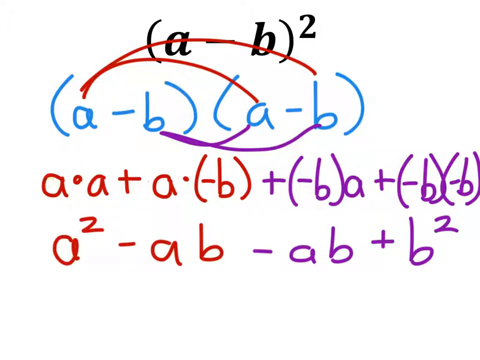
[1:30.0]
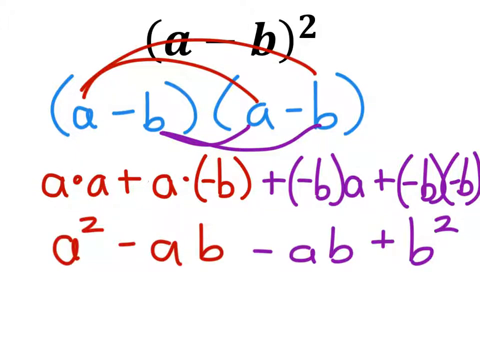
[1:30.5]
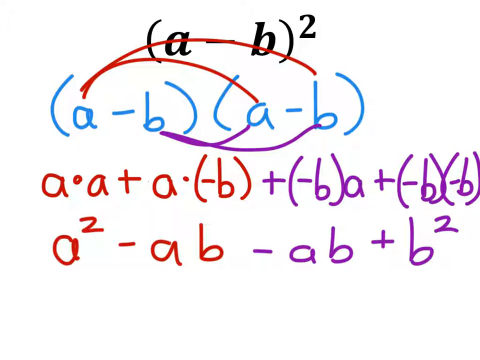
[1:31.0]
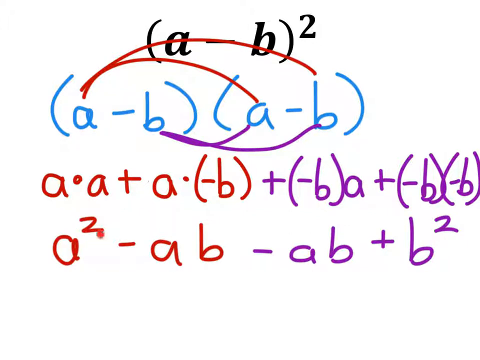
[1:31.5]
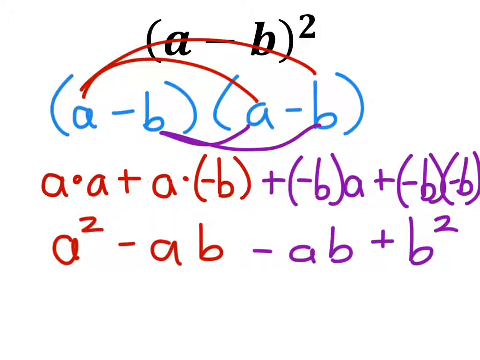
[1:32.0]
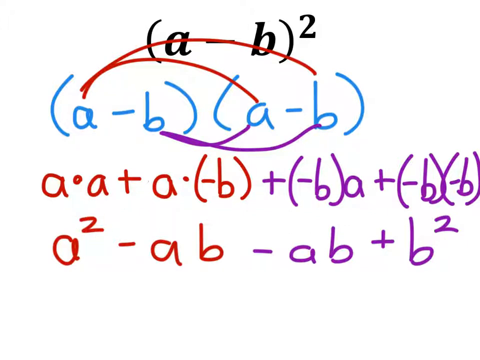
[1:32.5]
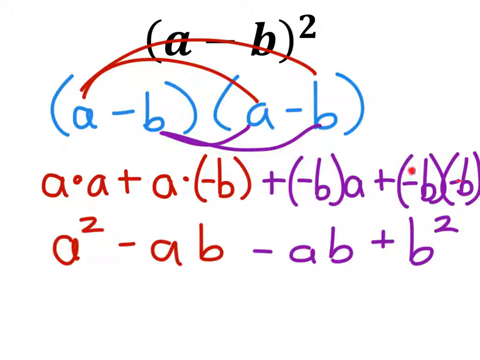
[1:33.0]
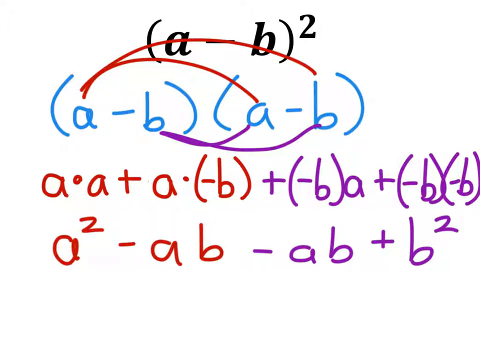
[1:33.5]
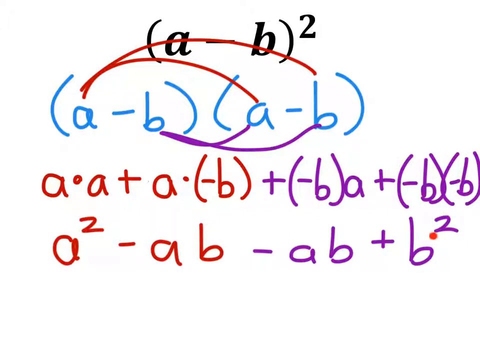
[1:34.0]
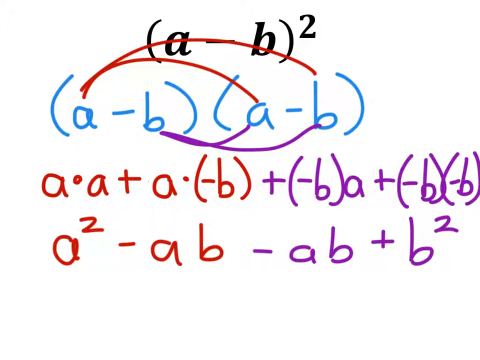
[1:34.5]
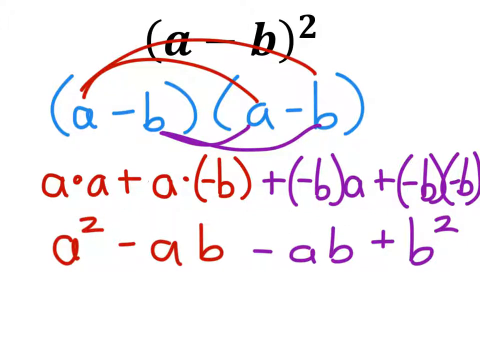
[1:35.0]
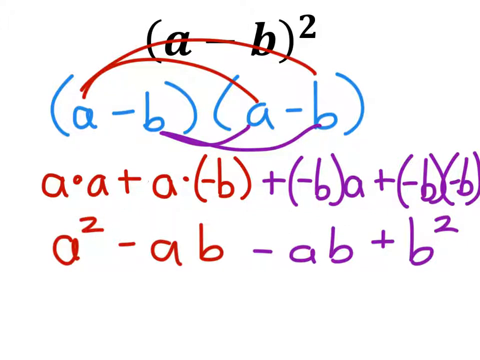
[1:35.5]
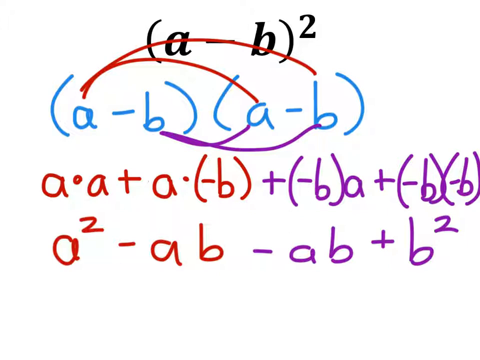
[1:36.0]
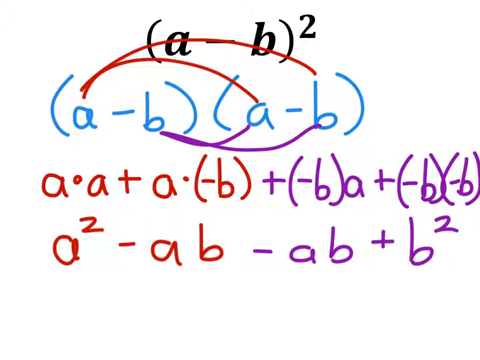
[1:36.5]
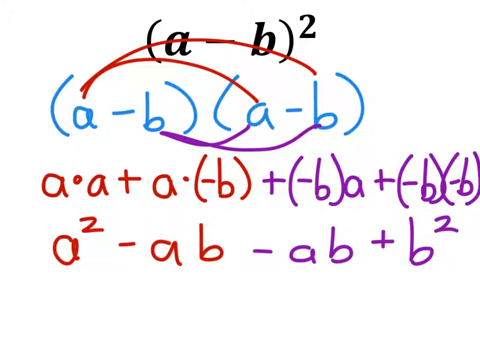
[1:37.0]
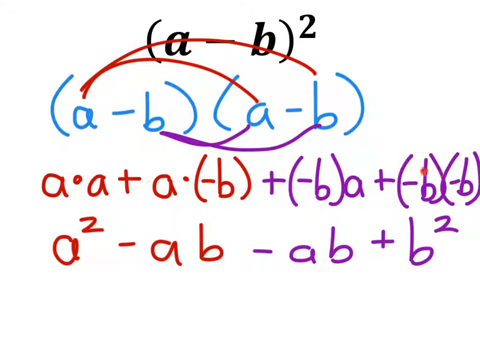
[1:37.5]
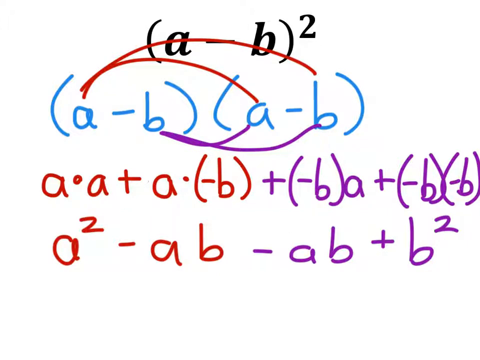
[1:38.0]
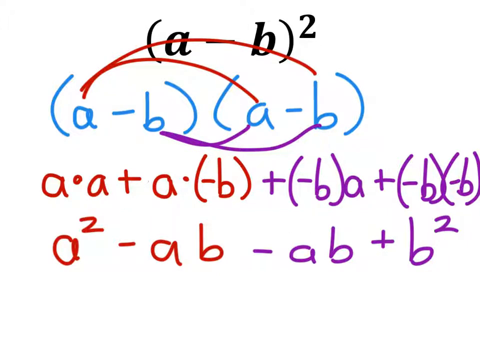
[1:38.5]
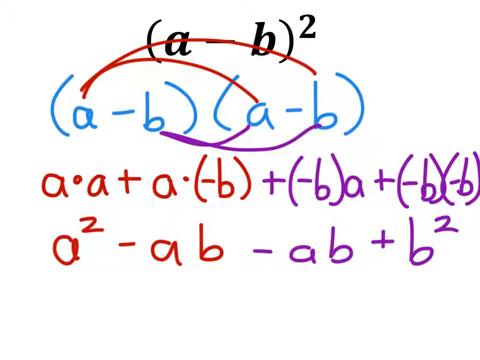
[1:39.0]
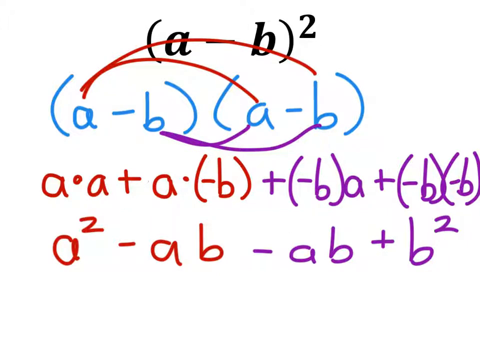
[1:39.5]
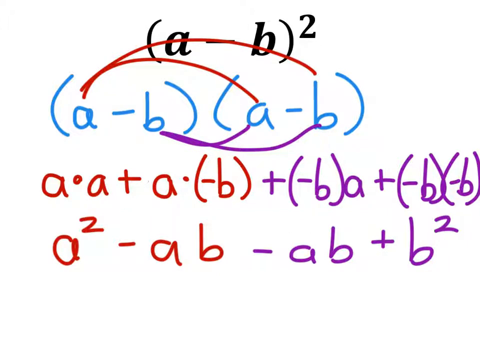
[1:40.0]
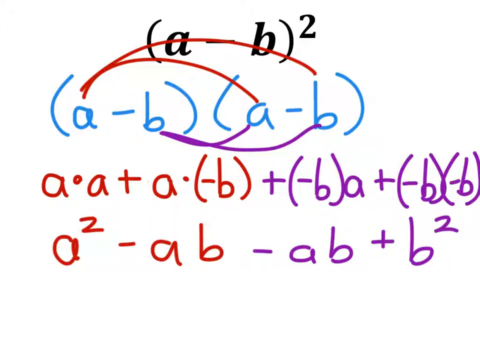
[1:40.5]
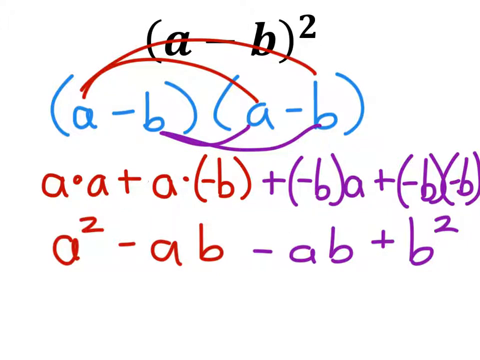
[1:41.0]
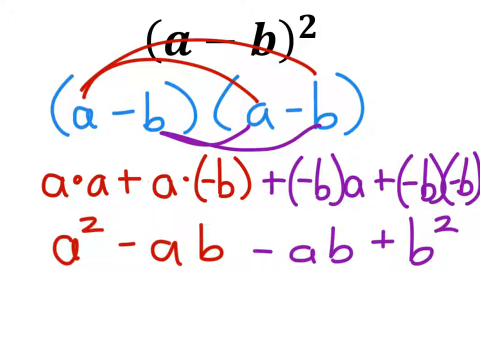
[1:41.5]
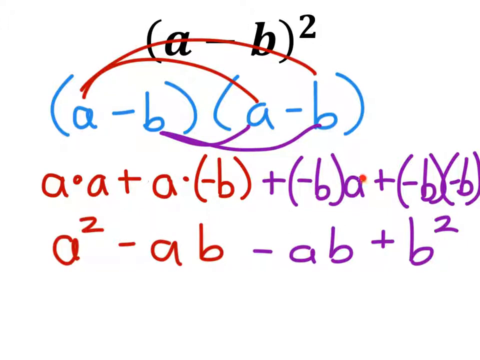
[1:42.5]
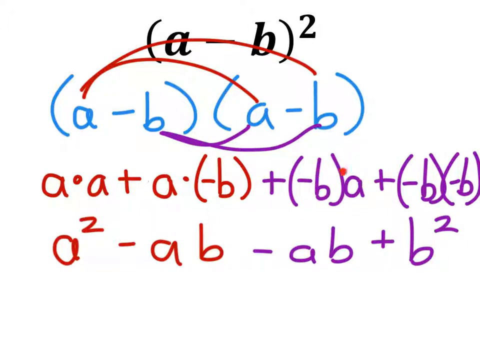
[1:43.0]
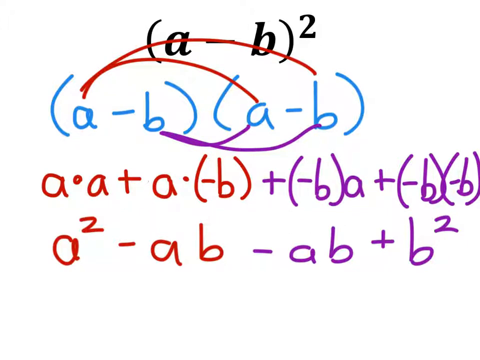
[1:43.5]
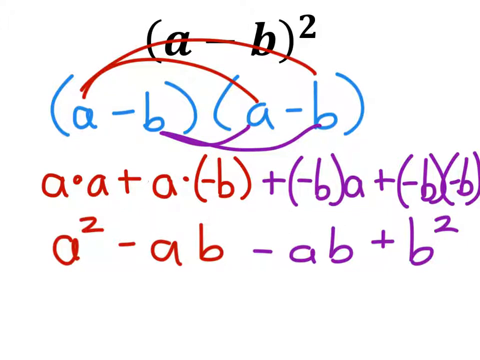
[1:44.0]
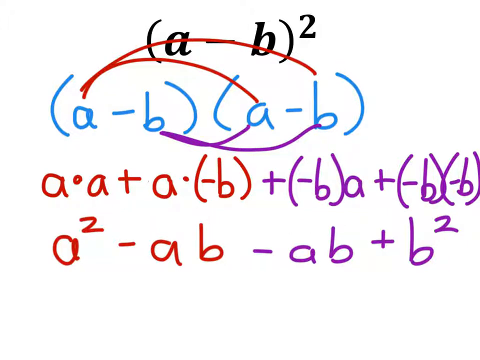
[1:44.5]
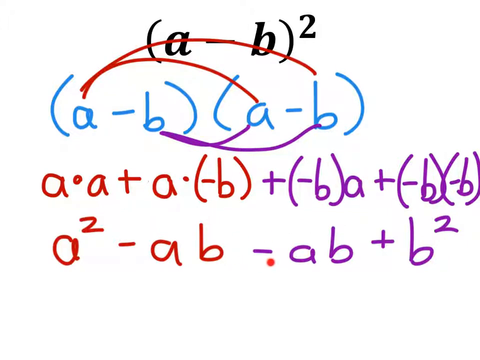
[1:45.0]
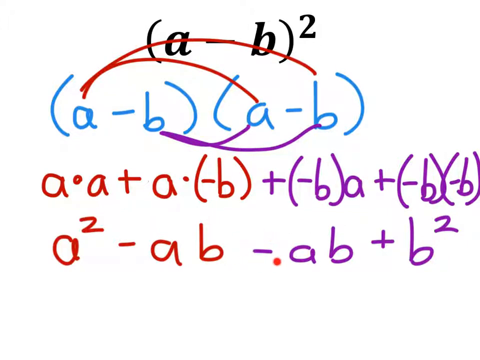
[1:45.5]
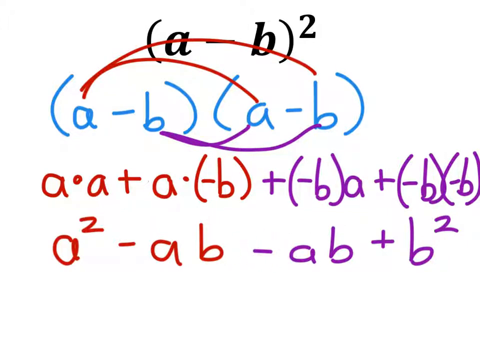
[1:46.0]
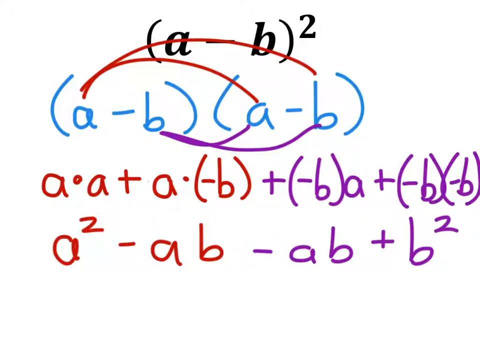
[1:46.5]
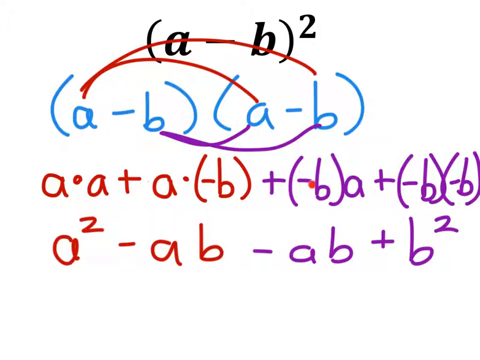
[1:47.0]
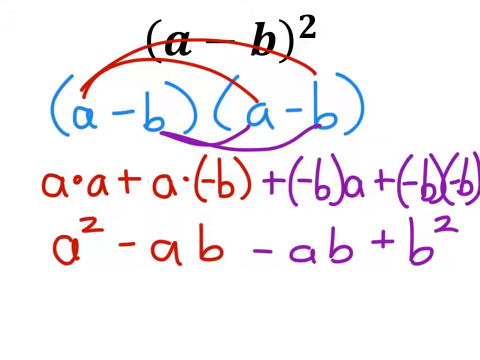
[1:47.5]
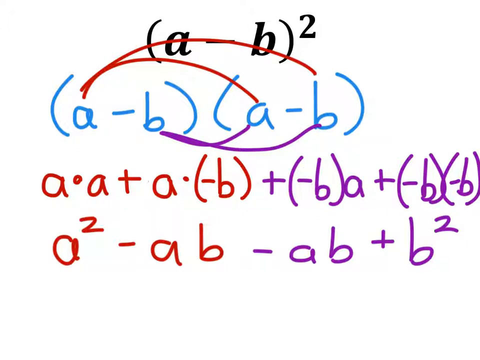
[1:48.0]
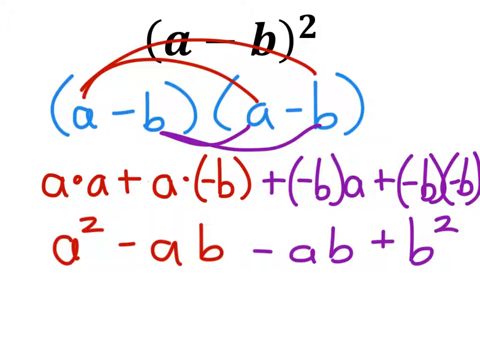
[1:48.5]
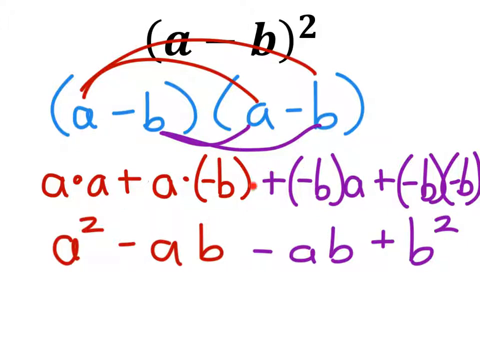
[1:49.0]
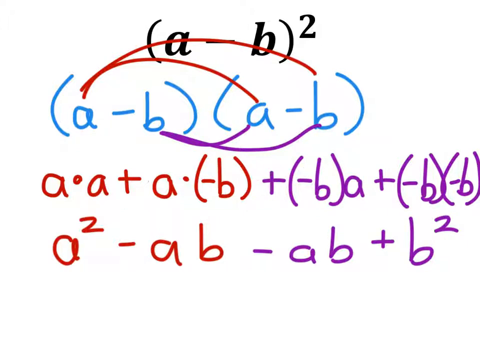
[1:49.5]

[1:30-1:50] In black is (A − B)², and below it in blue is (A − B)(A − B). On top of this are two red lines, one going from A to A and one from A to B, and under it are two purple lines, one going from B to A and one from B to B. Under this is A × A + A × (−B) + (−B)A + (−B)(−B), and below that A² − AB − AB + B². The instructor, whose cursor is a red dot, circles the two, points out −B times A, circles −AB, and then circles the plus sign.